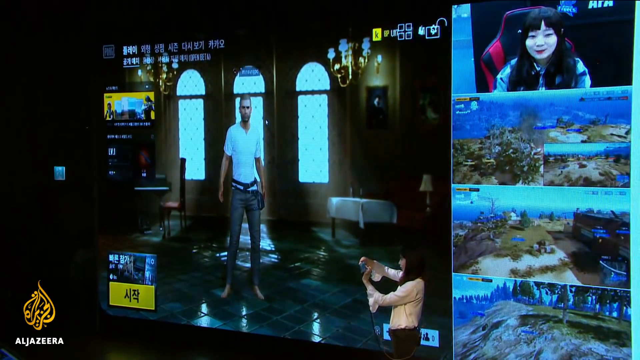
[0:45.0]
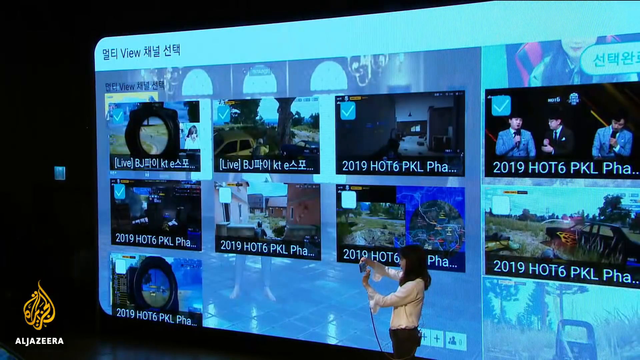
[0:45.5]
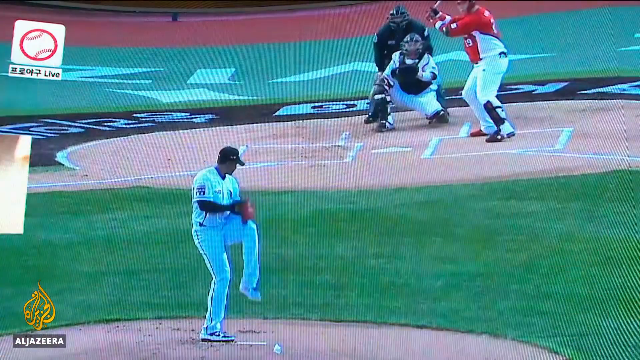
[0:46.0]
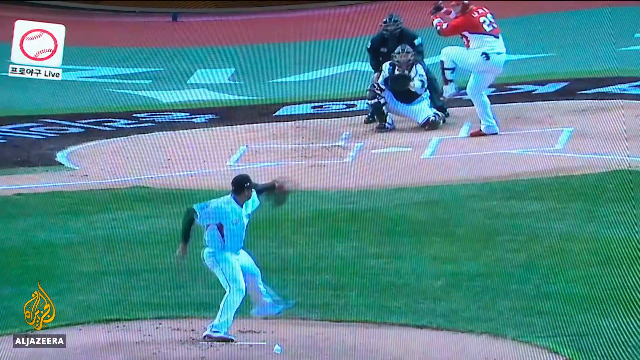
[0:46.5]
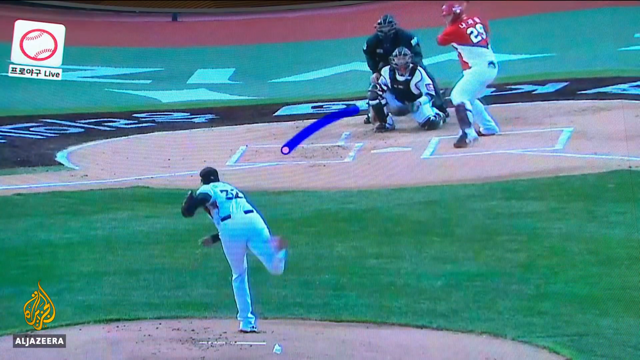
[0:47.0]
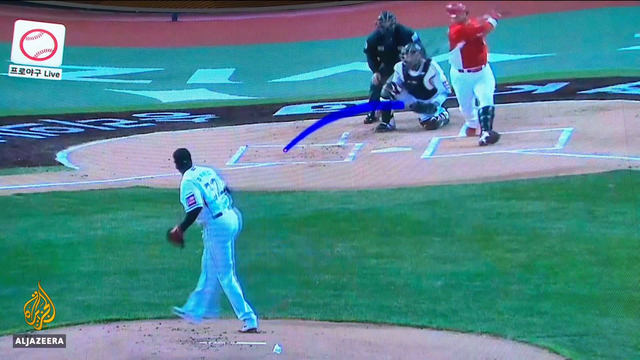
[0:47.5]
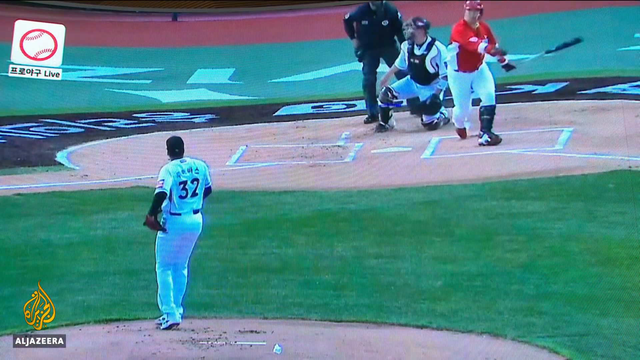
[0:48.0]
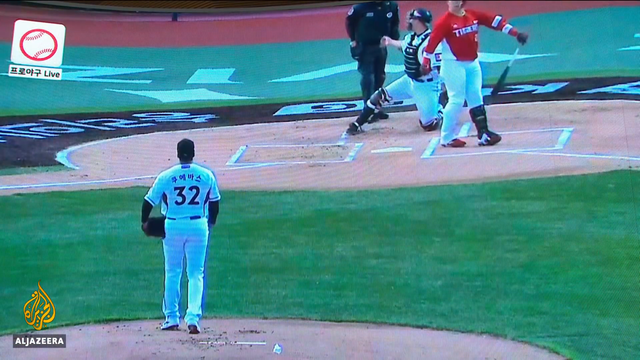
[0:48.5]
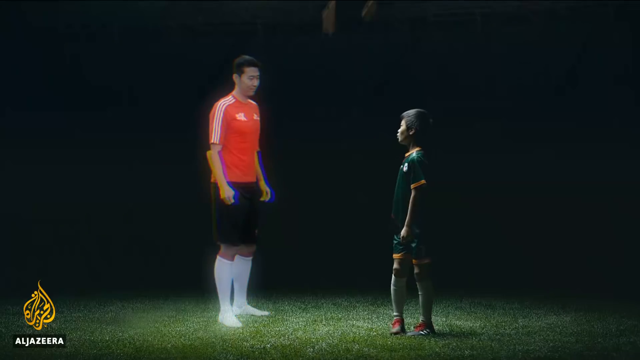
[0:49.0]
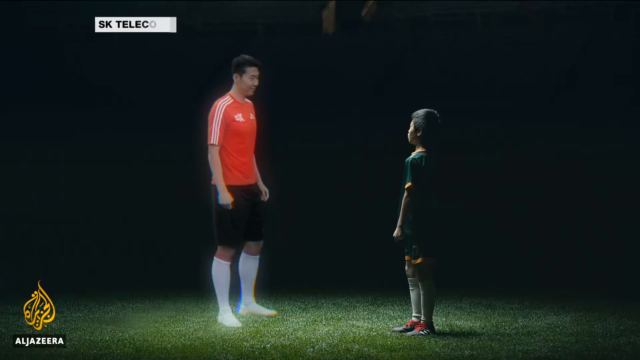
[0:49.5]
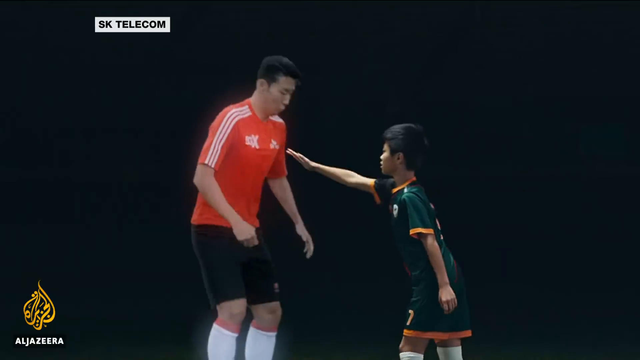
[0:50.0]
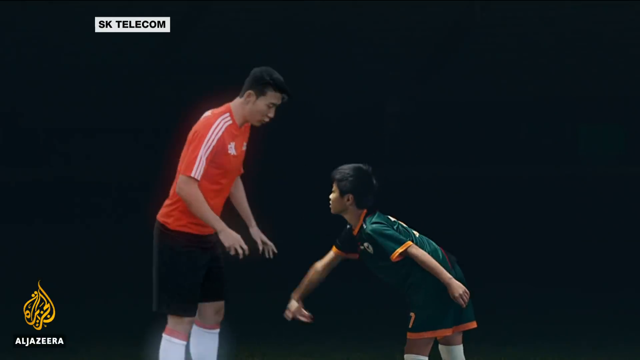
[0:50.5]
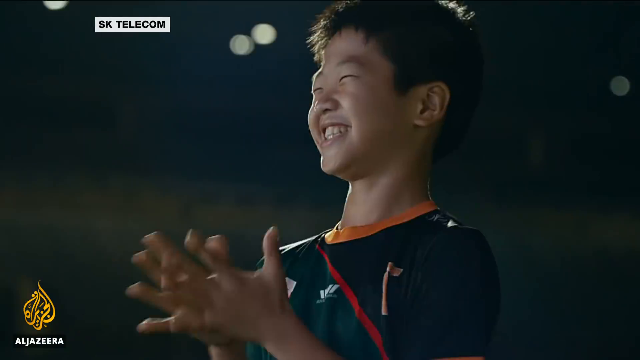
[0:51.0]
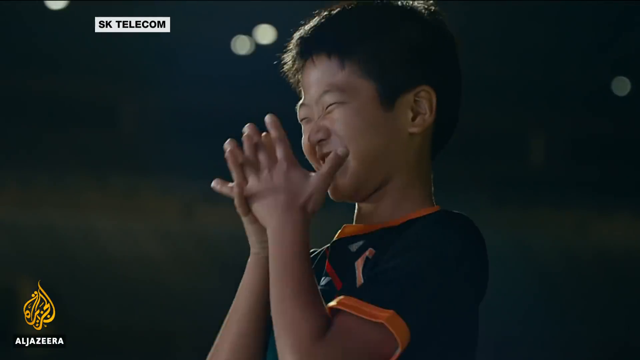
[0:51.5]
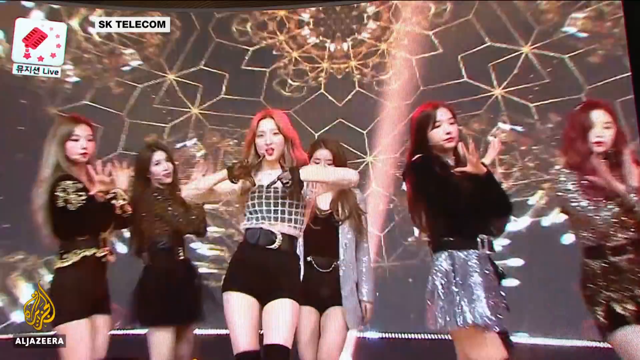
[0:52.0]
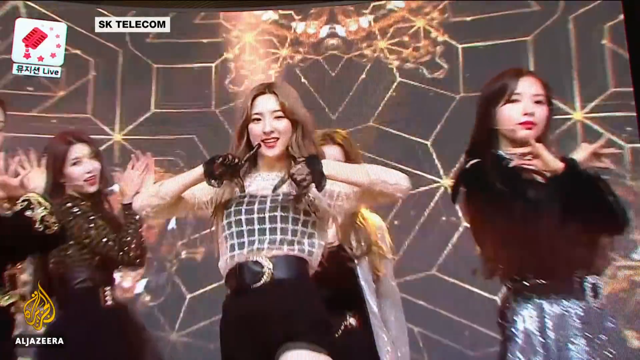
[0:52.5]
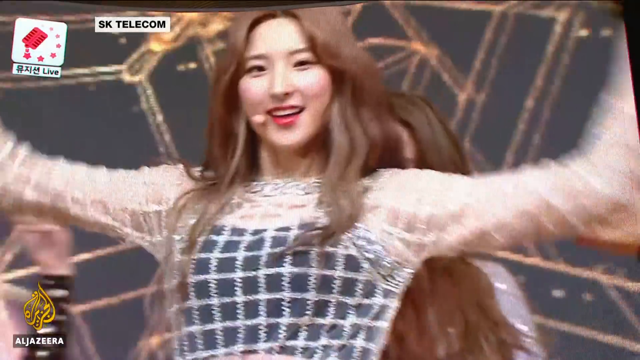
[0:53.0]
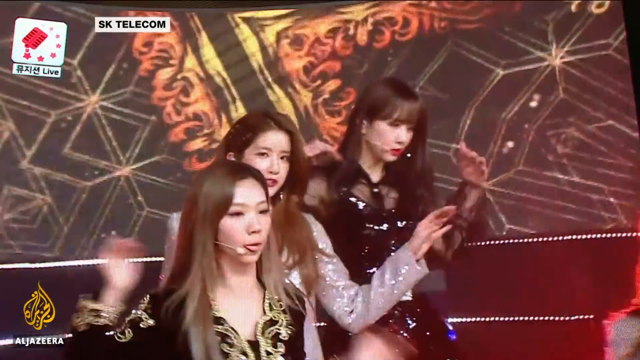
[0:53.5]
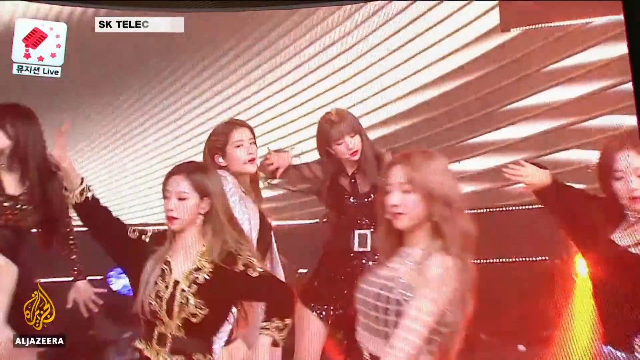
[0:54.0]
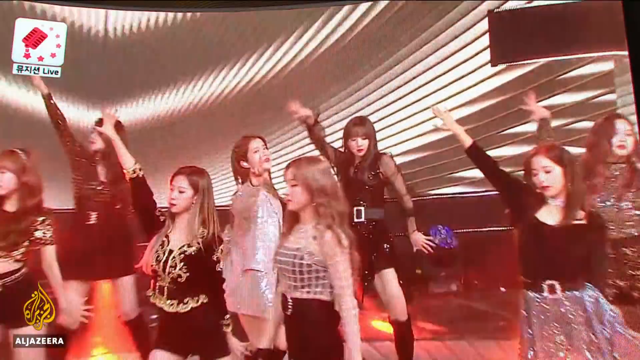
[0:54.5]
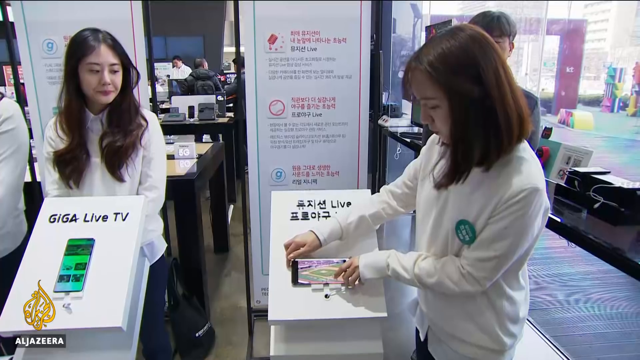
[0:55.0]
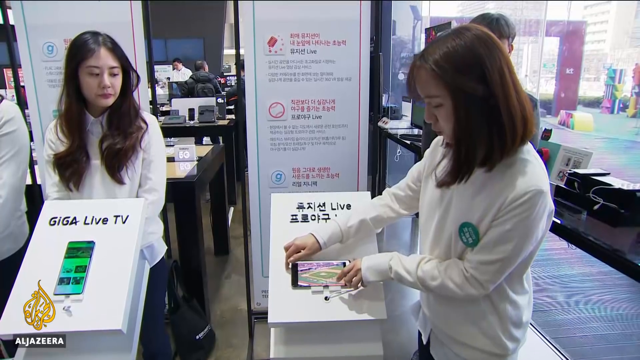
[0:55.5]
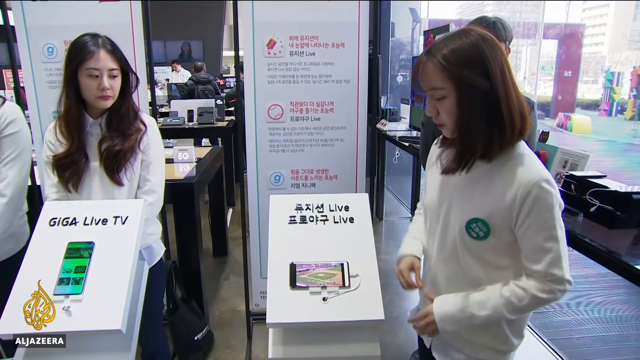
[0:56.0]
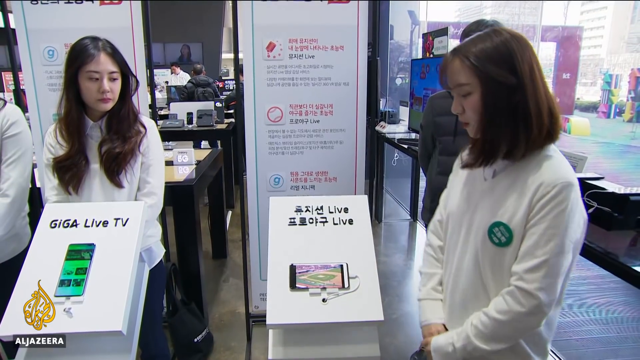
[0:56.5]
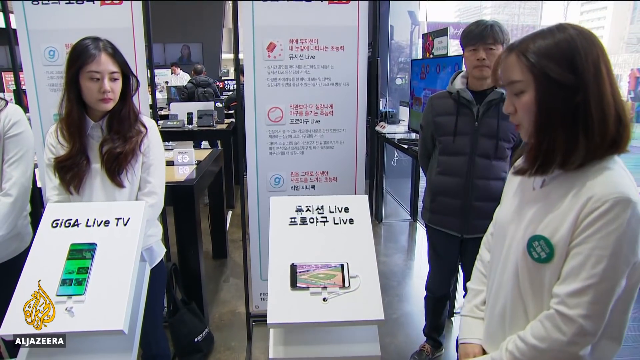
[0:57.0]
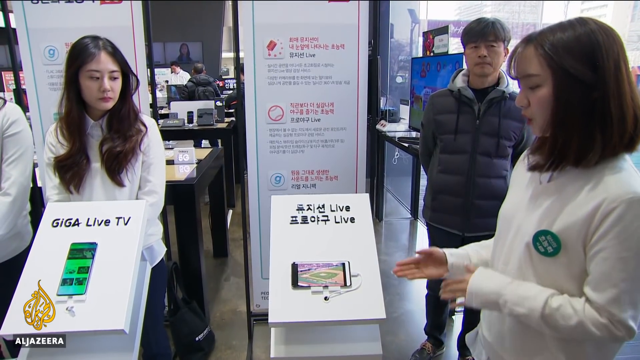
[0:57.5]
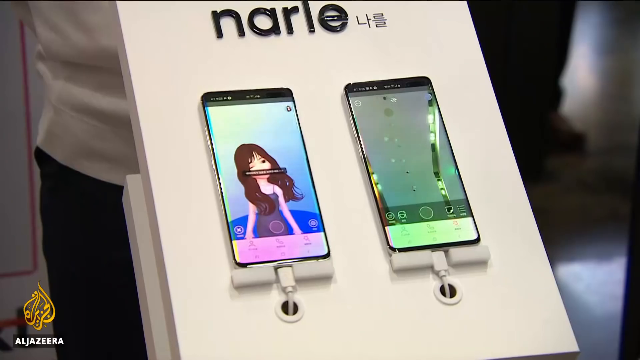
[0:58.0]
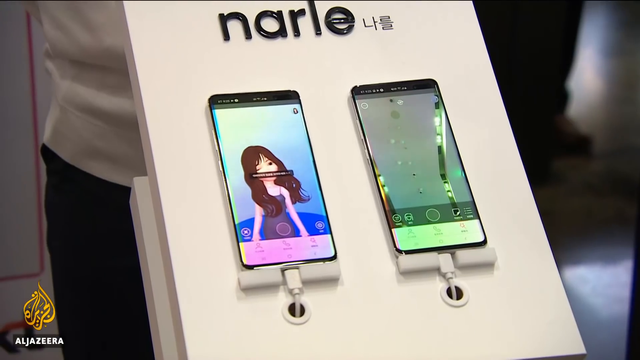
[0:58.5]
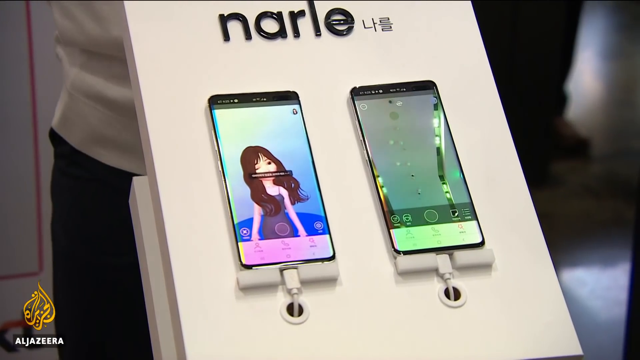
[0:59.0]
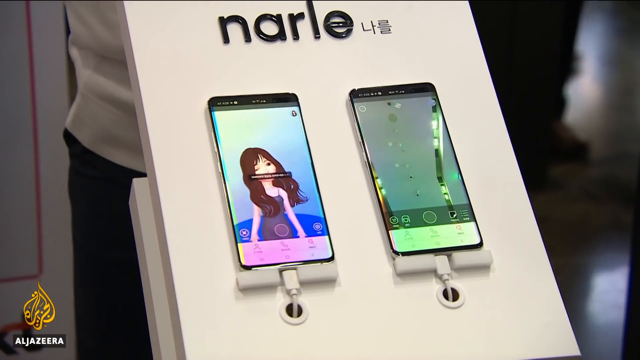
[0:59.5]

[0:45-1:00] The giant screen shows a selection of files for different experiences in the virtual reality game, including baseball, where throwing the ball shows the trajectory of the simulated throw, and then a simulation of playing soccer with a soccer coach. The video cuts to a K-pop girl group of at least eight very young Asian girls, dressed cute and poppy, dancing on a stage. The camera then returns to young people at a booth or display with "Giga Live TV" written on it. One display has a phone that says "Giga Live TV," and next to it another display also has a phone with Asian writing, presumably Korean. Two young girls dressed all in white stand next to these waist-high displays, explaining the information on them. One of them touches a phone on the display, showing that the phones are real, and demonstrates how to use the game on the phone. A close-up shows one display with two phones plugged in and turned on: one has a blank green screen, and the other shows a girl avatar, Caucasian or Asian, with the title "NARLE" on top. The view pans out to two younger people standing behind the display, all standing to give information about the game; they appear to be at the same convention.